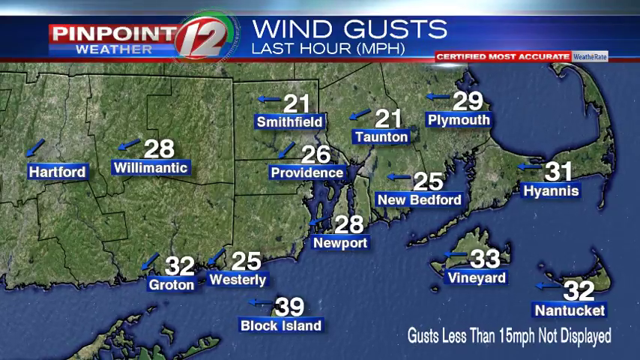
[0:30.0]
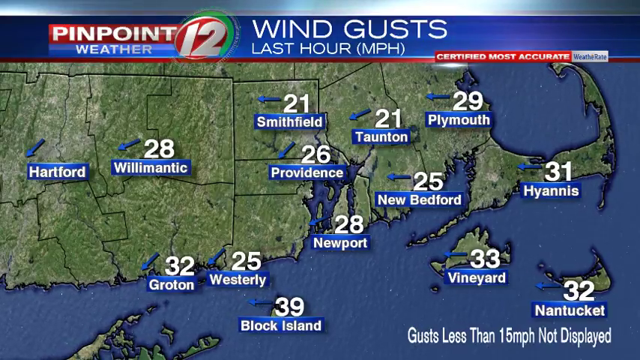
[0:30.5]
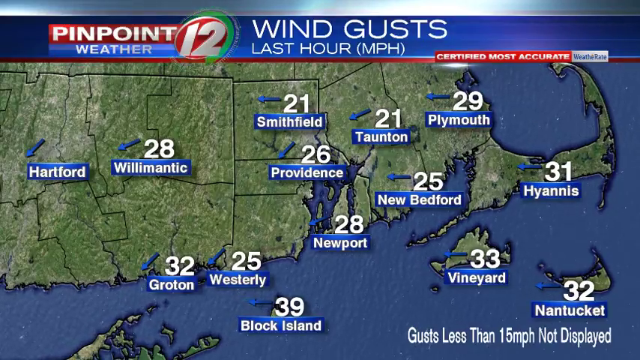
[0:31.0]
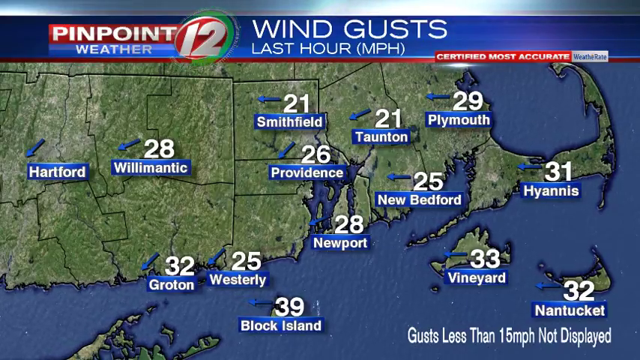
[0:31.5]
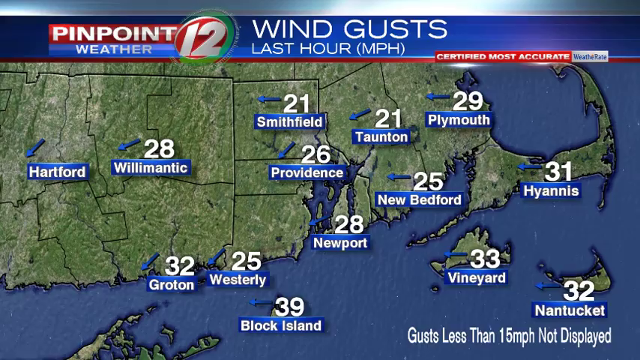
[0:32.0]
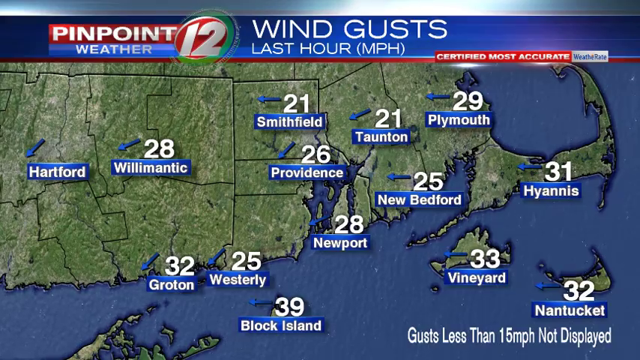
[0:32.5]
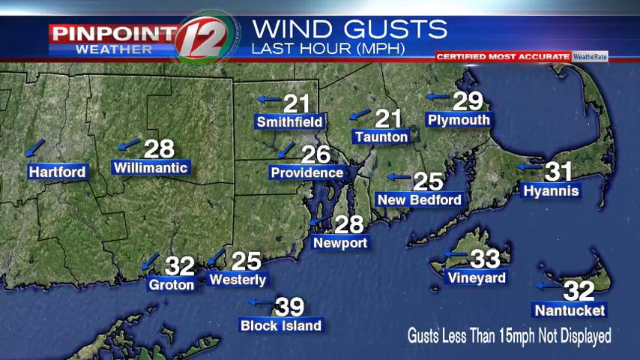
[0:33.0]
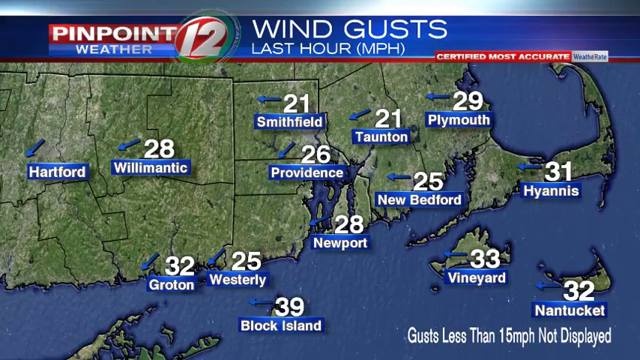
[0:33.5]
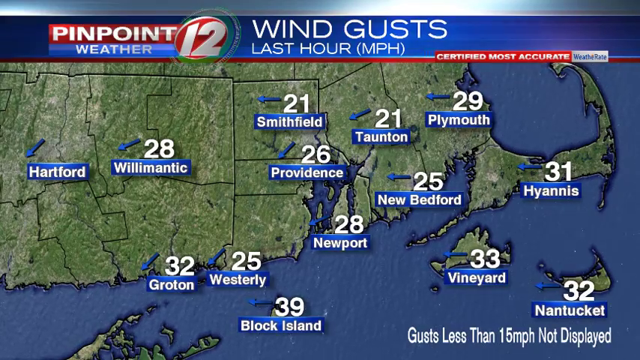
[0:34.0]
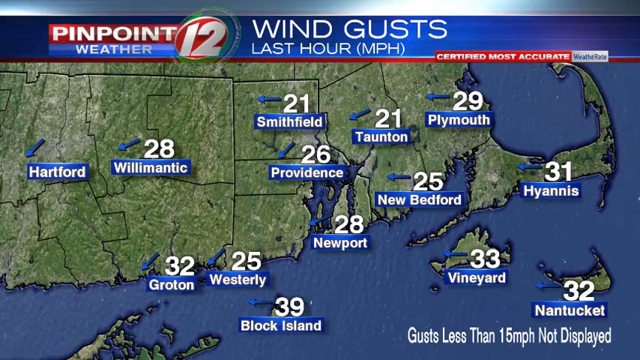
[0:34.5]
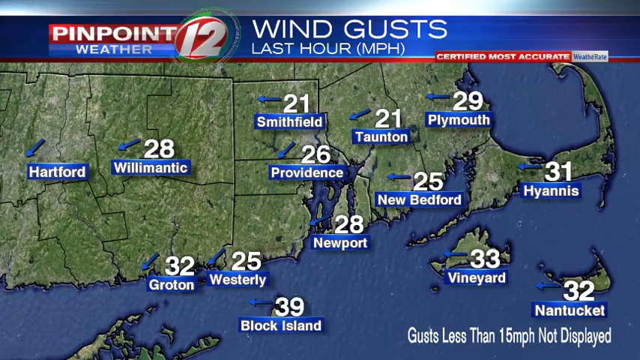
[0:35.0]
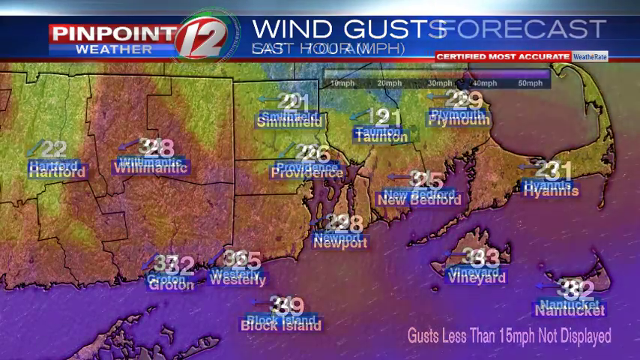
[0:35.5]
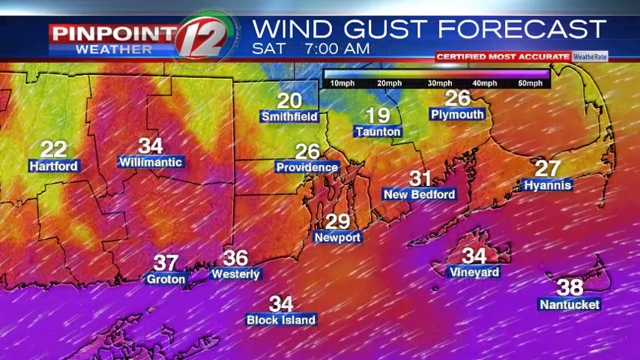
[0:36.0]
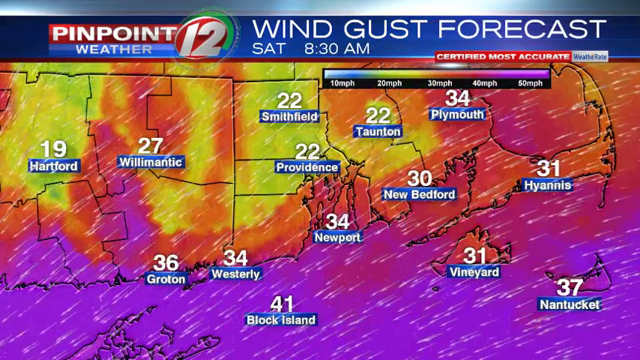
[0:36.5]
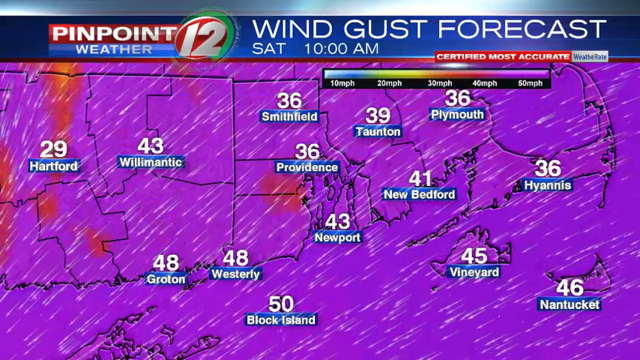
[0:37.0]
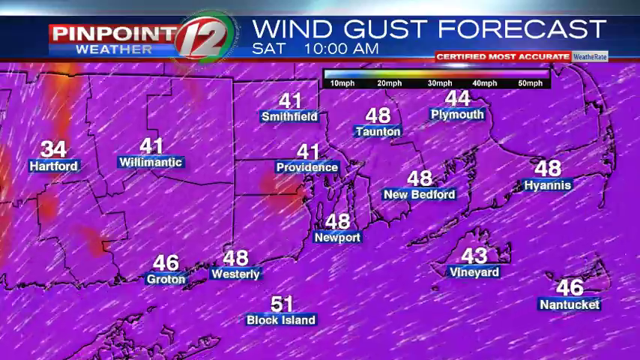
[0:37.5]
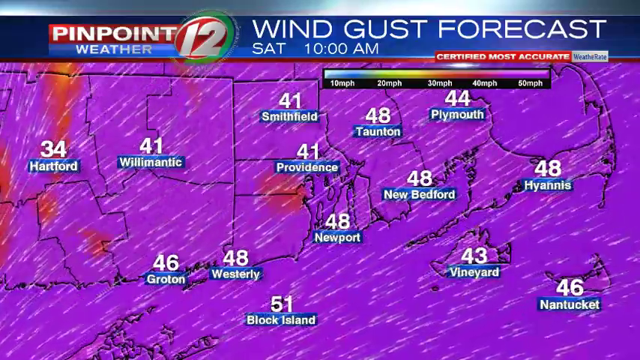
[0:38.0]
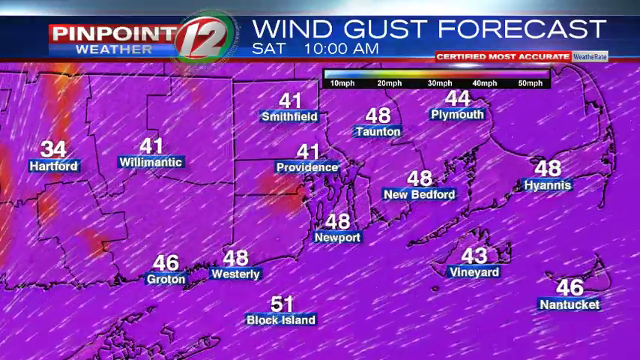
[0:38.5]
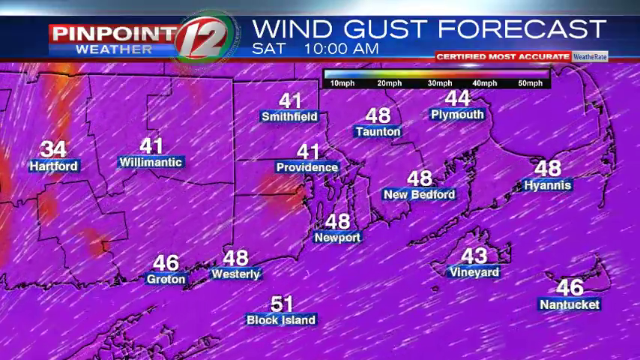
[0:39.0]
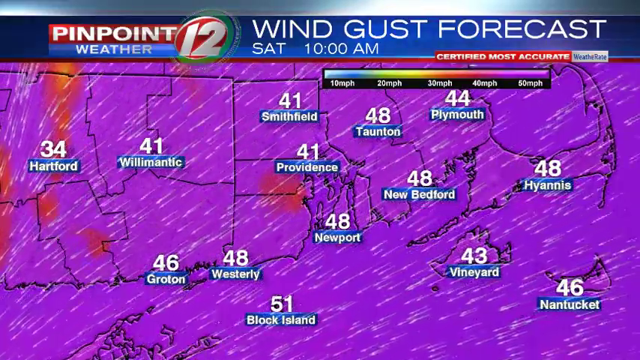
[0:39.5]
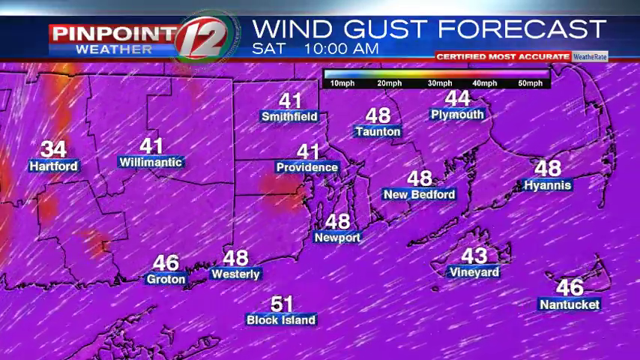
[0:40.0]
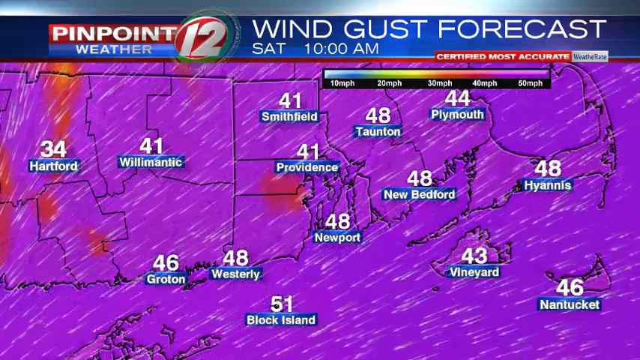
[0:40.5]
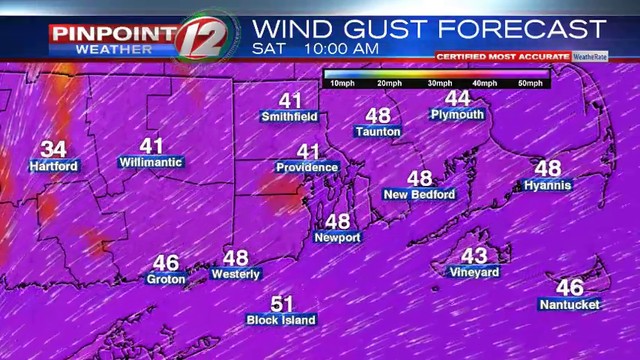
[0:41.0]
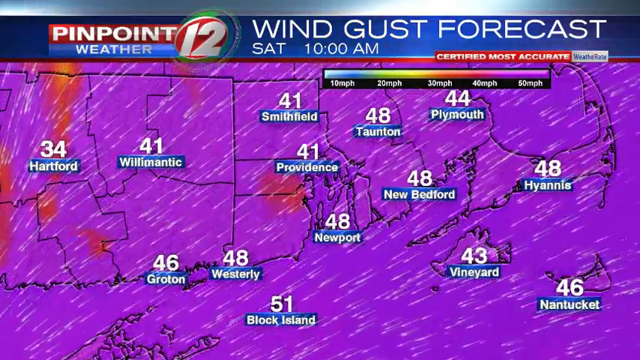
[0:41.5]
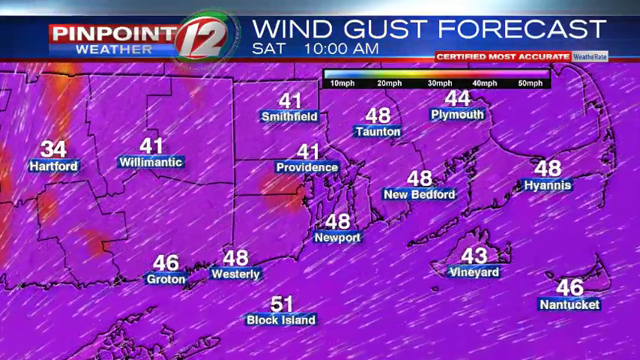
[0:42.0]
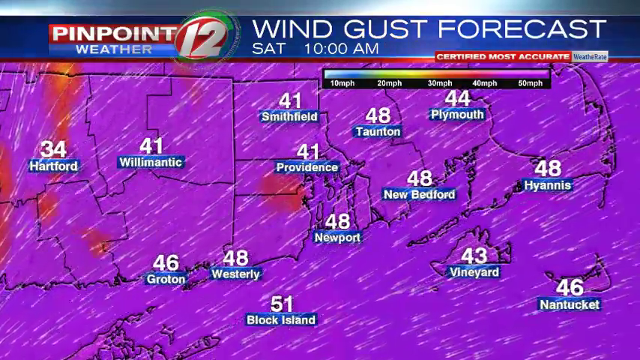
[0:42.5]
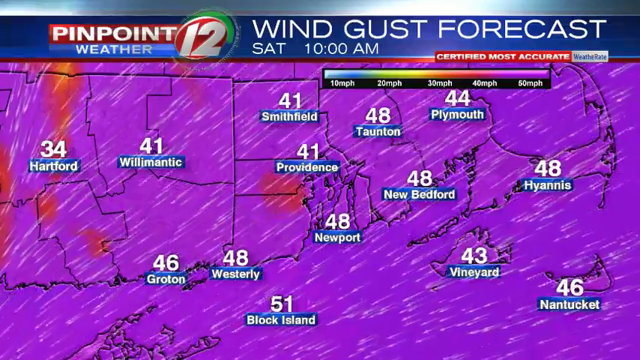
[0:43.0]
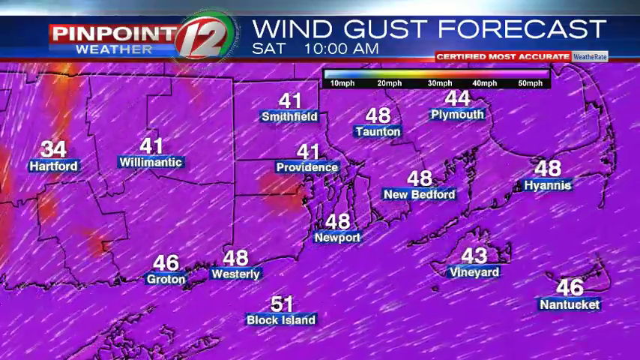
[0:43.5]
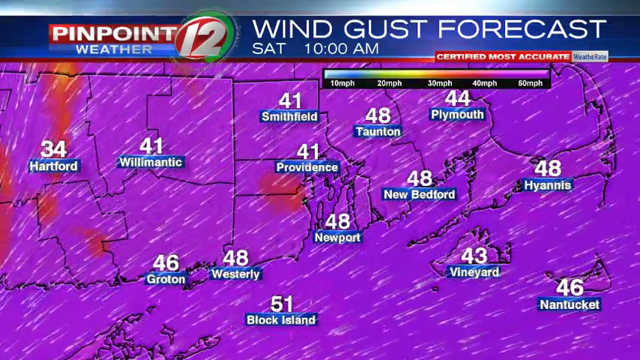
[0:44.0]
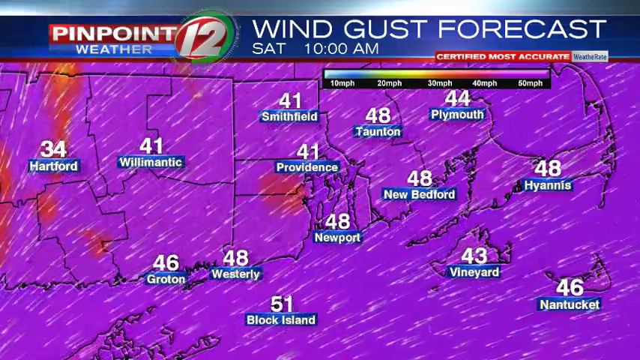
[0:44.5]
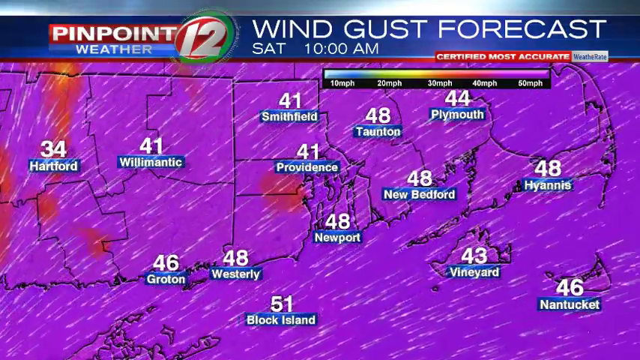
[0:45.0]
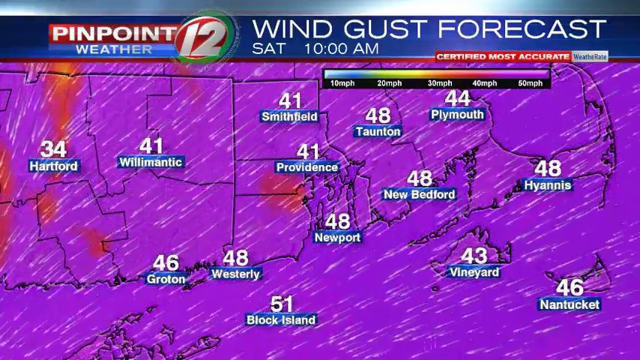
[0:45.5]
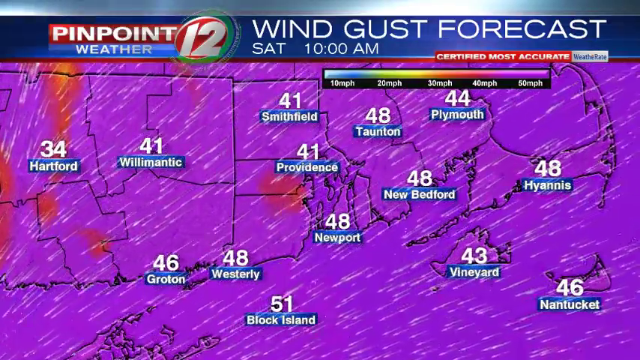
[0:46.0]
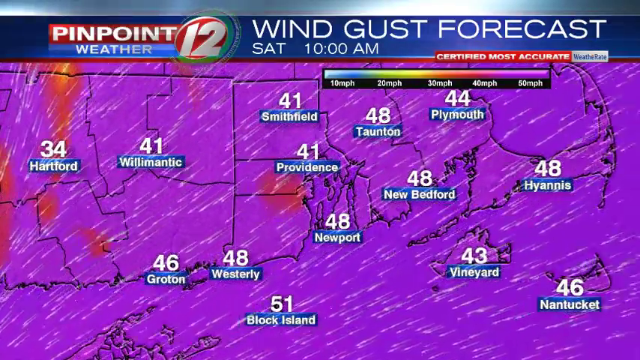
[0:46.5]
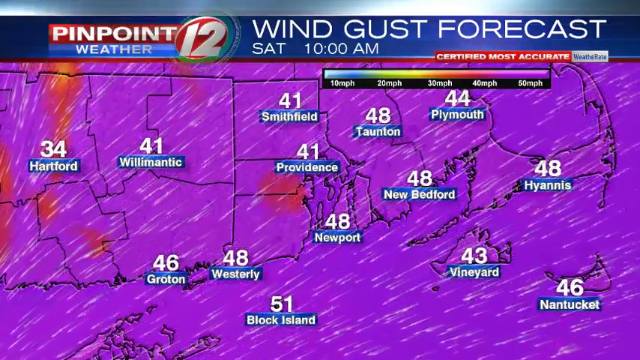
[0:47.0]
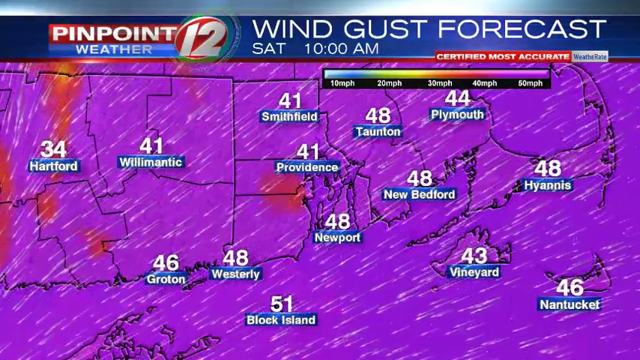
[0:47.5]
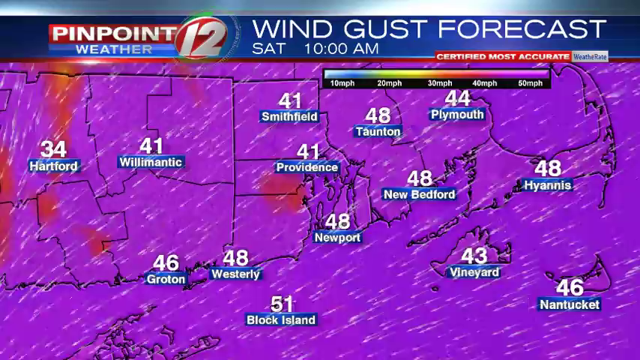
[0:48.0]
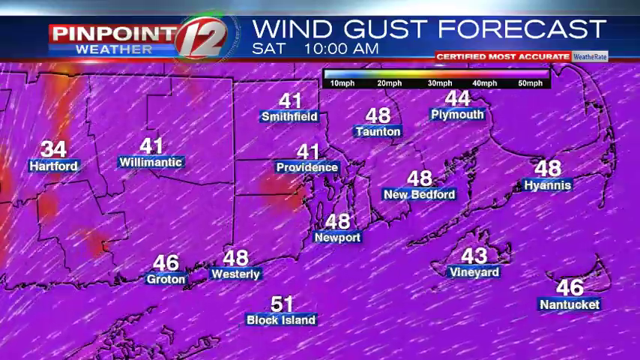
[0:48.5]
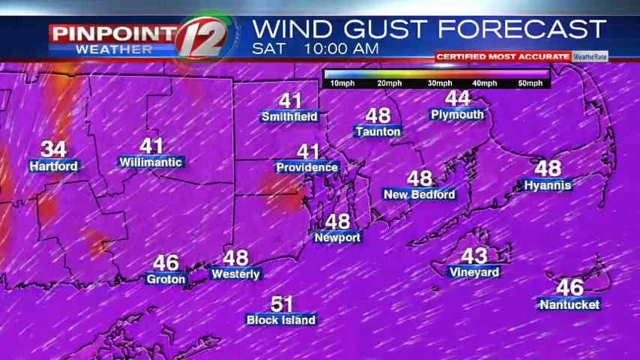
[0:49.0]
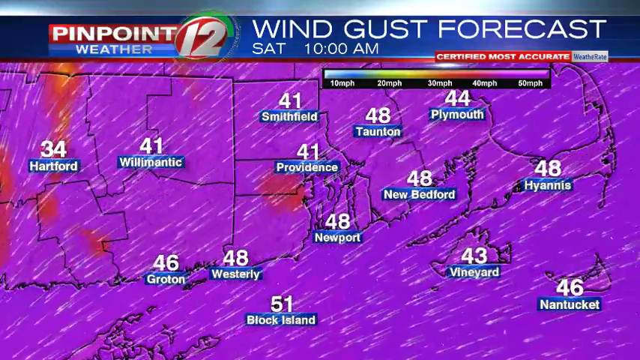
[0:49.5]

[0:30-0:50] A map shows parts of southern New England: most of Massachusetts and the Cape, Martha's Vineyard and Nantucket, Rhode Island, and Connecticut. The land is green and the ocean is a grayish-blue. Across the top the text reads "pinpoint weather 12," "wind gusts last hour MPH," and "certified most accurate." Below, numerous towns are outlined in blue with their names, each with a number above it indicating the measured wind gust speed. The map then changes, becoming overlaid with yellow and red and finally purple. The top text now reads "wind gust forecast Saturday 10 AM," and white streaks across the map indicate the wind direction. The same towns are still labeled, and all their numbers have gone up by about 10. Most of the map is purple, with some areas highlighted in orange.